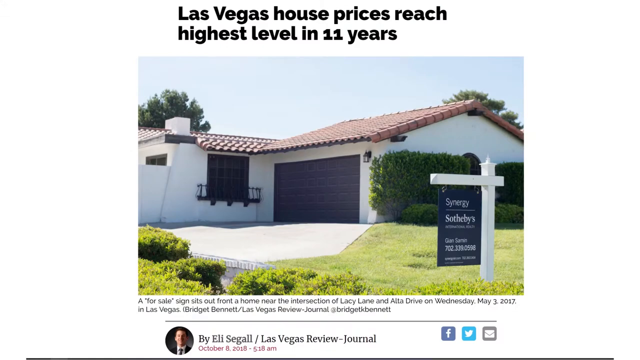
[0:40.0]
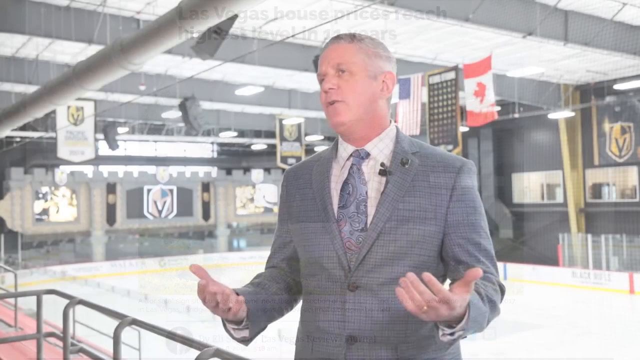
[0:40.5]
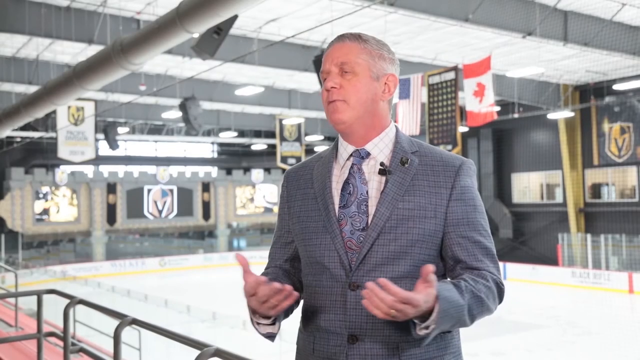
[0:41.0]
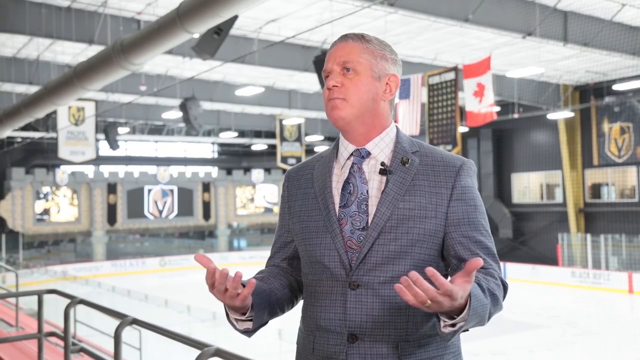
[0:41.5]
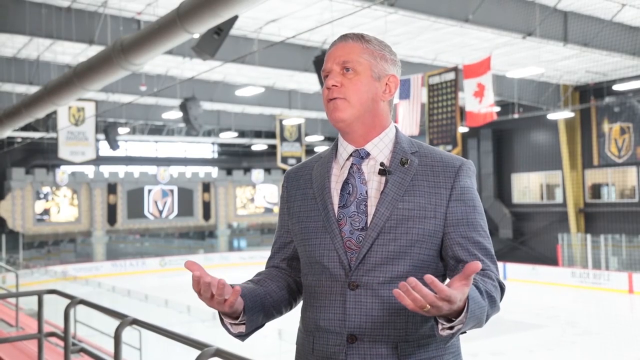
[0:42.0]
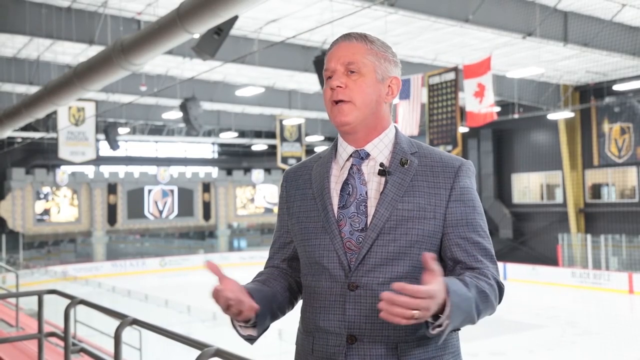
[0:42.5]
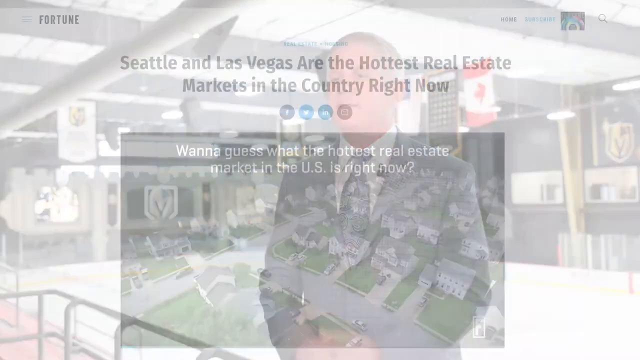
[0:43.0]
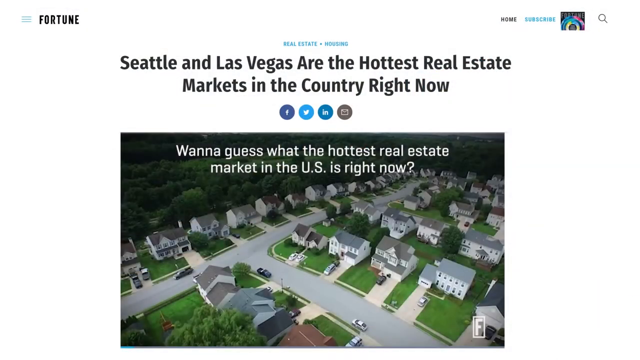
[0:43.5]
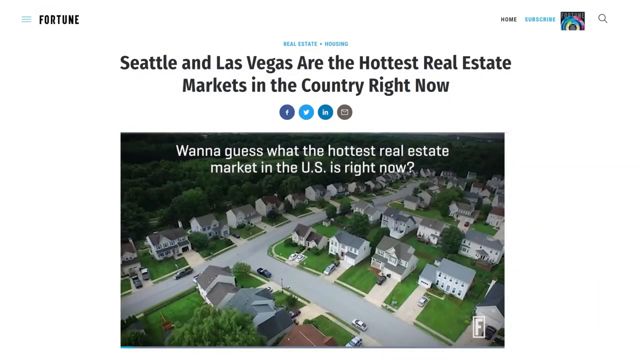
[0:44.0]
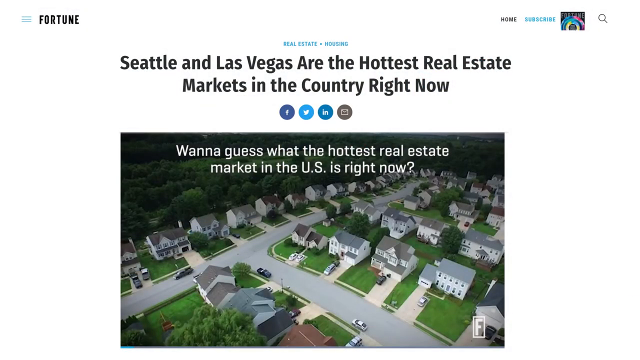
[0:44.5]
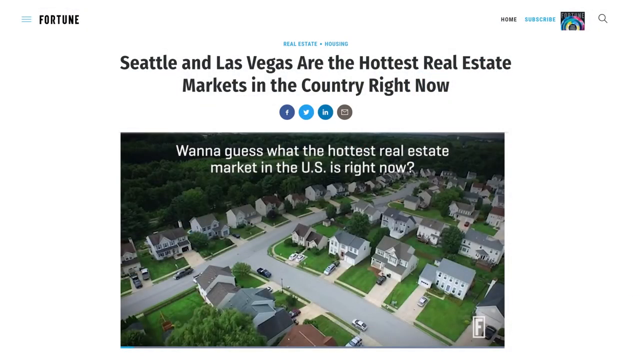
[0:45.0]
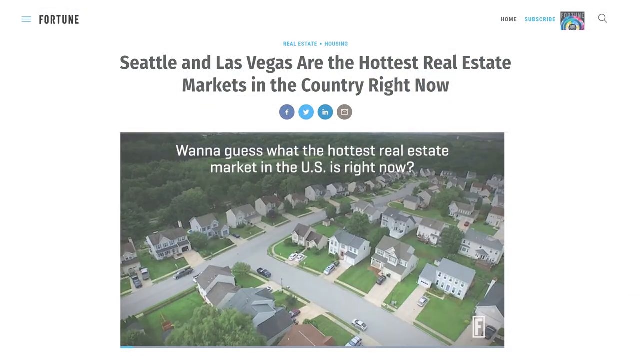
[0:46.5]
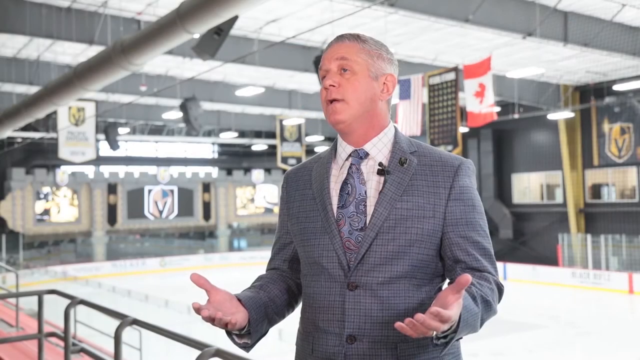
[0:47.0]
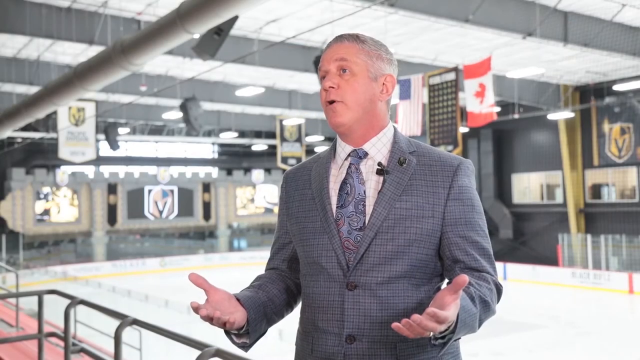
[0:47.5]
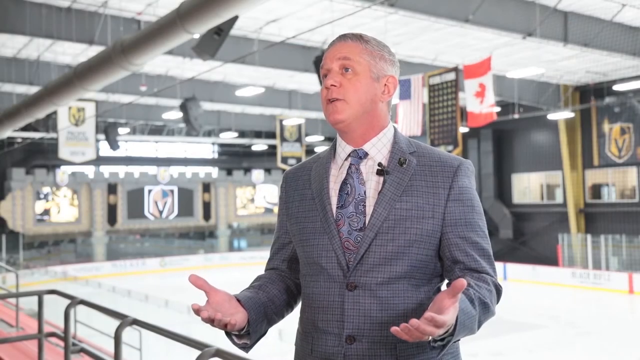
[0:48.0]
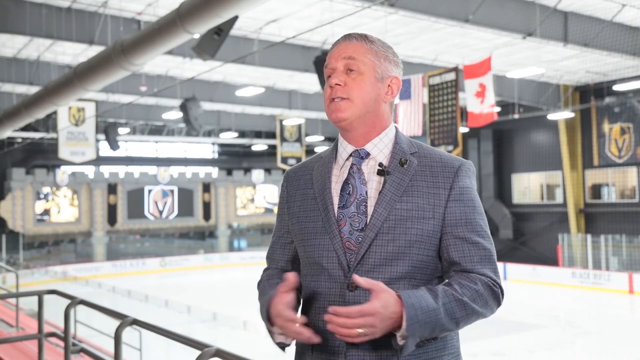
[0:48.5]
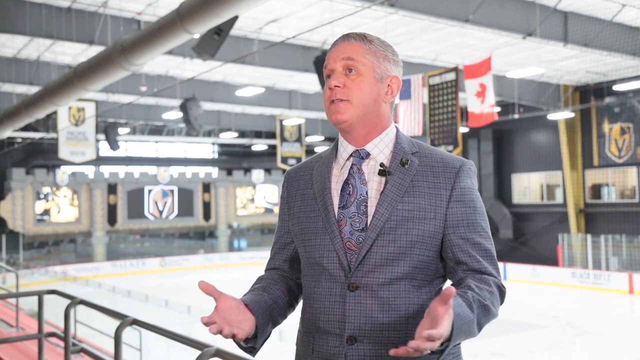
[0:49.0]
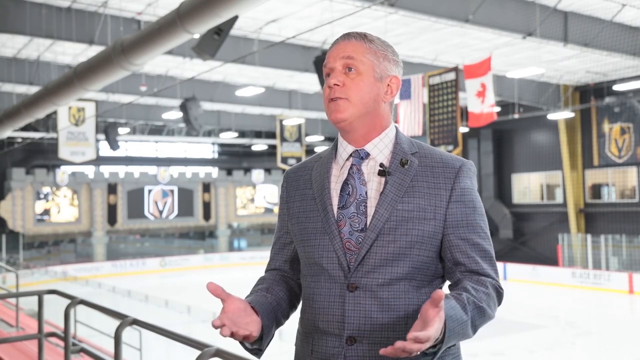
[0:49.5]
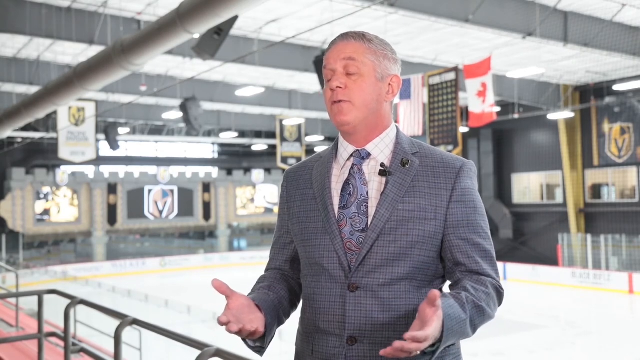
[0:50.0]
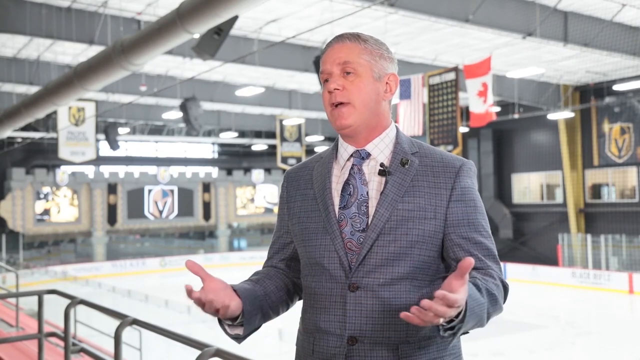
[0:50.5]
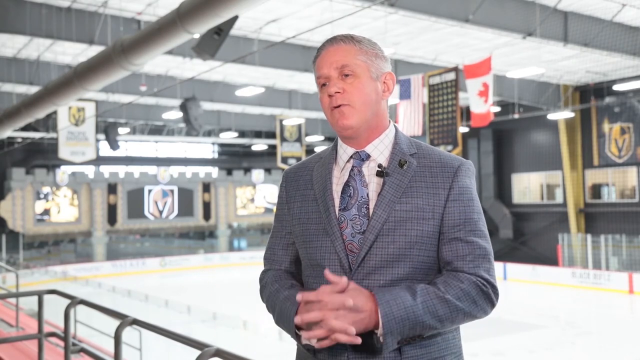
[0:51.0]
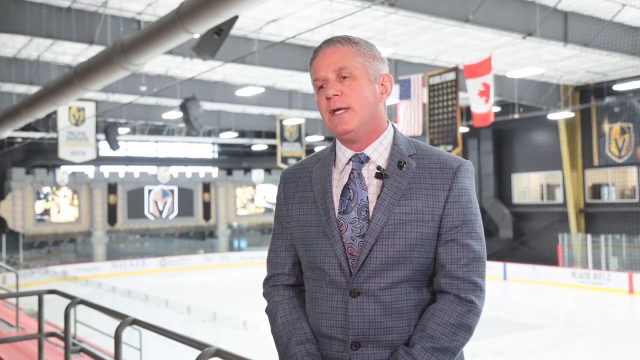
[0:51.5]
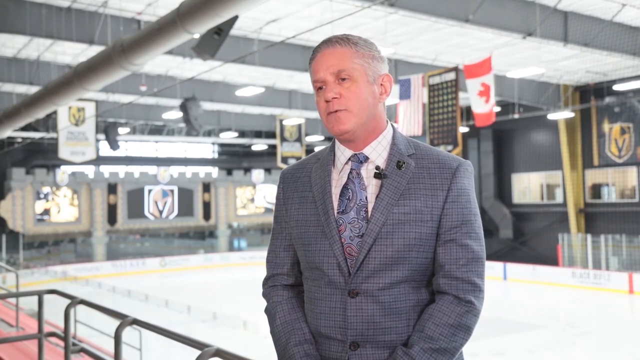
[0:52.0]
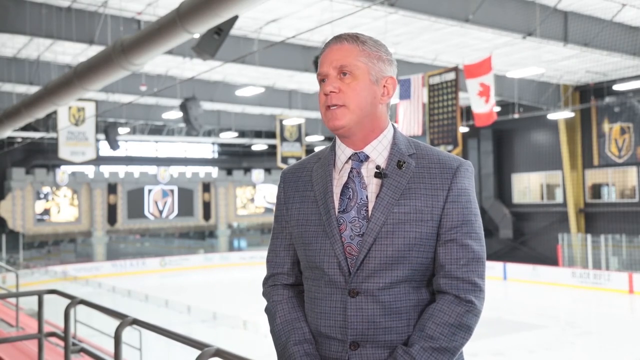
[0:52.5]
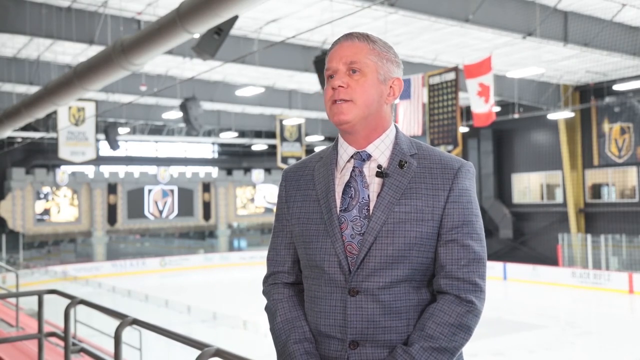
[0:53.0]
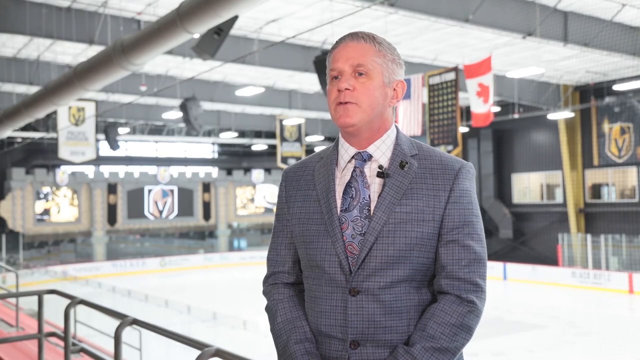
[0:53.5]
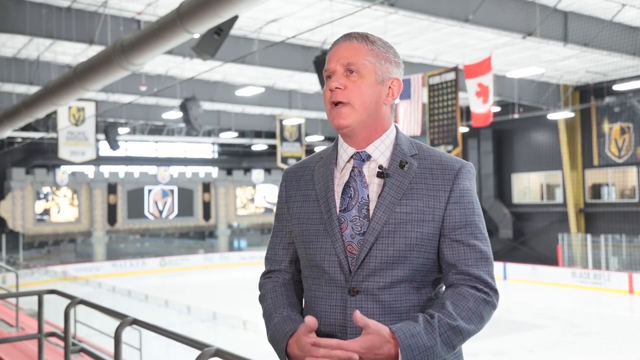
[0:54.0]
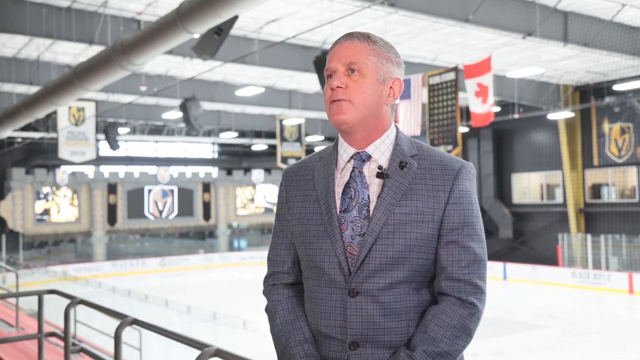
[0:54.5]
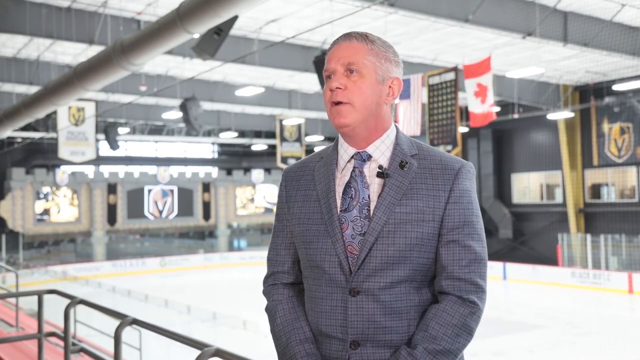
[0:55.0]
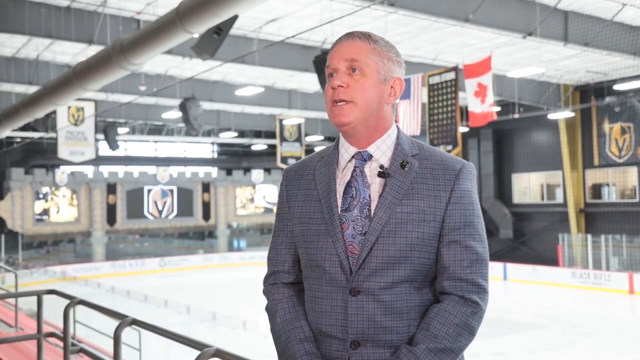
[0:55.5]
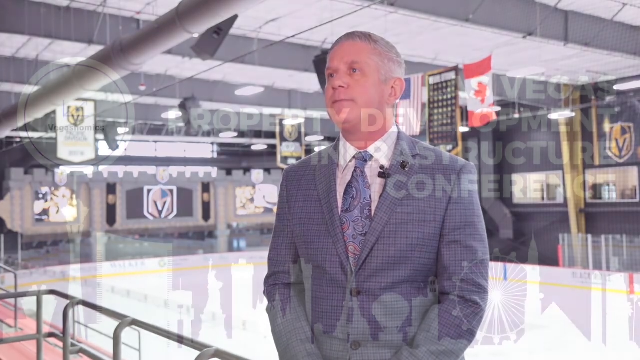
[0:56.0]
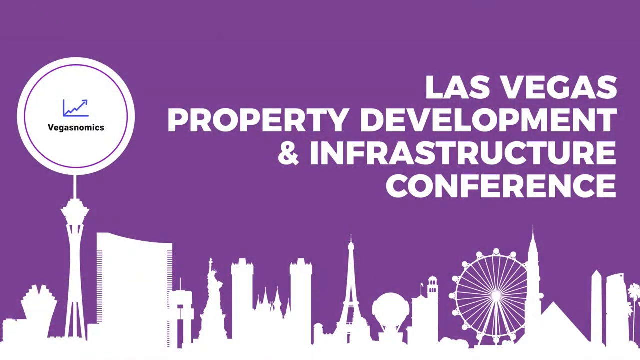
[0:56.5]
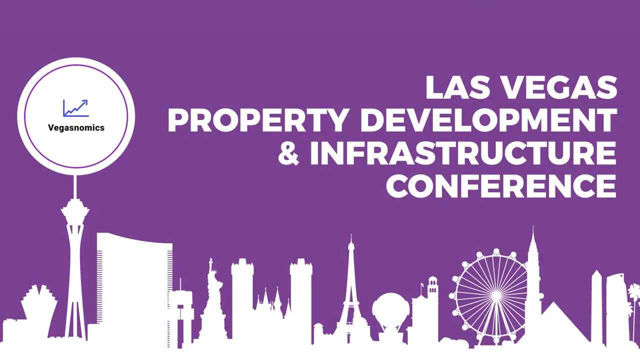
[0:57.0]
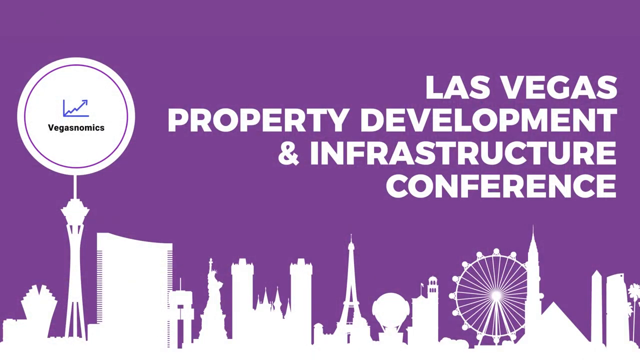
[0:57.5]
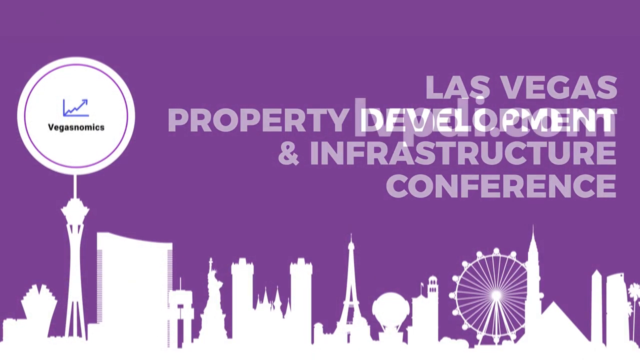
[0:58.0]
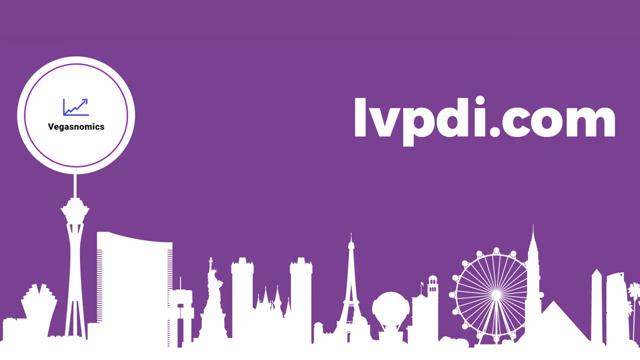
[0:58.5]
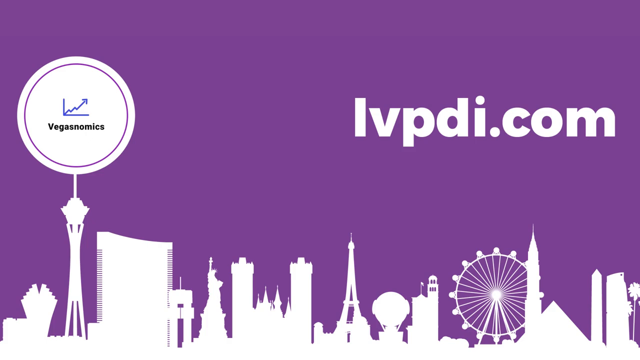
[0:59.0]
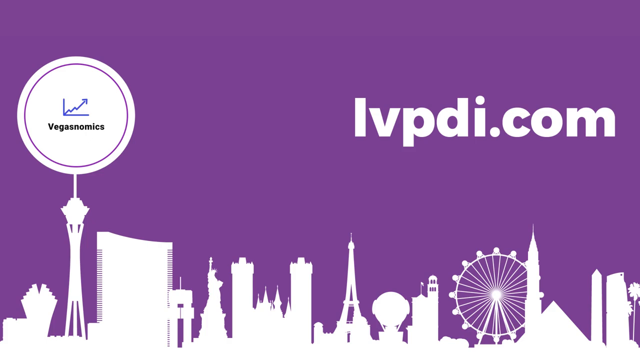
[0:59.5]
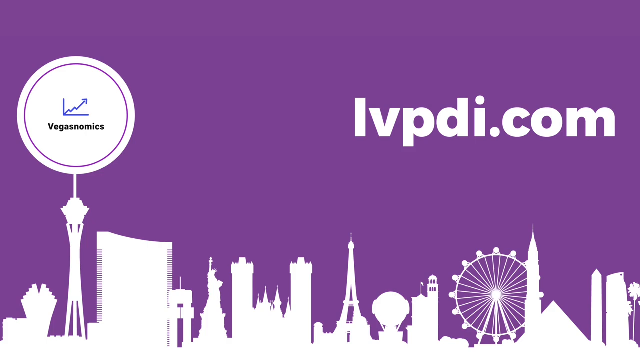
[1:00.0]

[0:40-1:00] A white background has a gradient to black across the bottom 20% of the screen, giving an illusion of depth. In the middle, black text on white says "Las Vegas house prices reach highest level in 11 years." Below it is a daytime photo of a house for sale by Sotheby's, with white walls, a dark gray garage door and a red shingled roof; the view looks mostly in on the garage door, and a well-manicured lawn with bushes is out front. The image fades away, and the video cuts back to Kerry Bubles in what is apparently the hockey play area. His back is to a fence, a railing overlooking the white surface with a yellow border that creates inbound and outbound zones, and large lights are above. He speaks and gestures with both hands, clasped in front of him. The video cuts to another article against the white backdrop, titled "Seattle and Las Vegas are hottest real estate markets in the country right now", with an aerial photo of tract housing, each house with a lawn in front, and a forest above. White caption text on the photo says "I want to guess what the hottest real estate market is in the US right now". It stays for a moment, then the video cuts back to Kerry Bubles where he was. He continues speaking, gesturing by bringing his hands together and moving them apart, clasping them and lowering them, then raising them again. Finally, a purple backdrop shows a white silhouette of a city including a Ferris wheel, a large sign with the word "Vegas" and an arrow pointing up like a rising line, and bold text reading "Las Vegas Property Development and Infrastructure Conference", which then changes to "LVPBI.com".